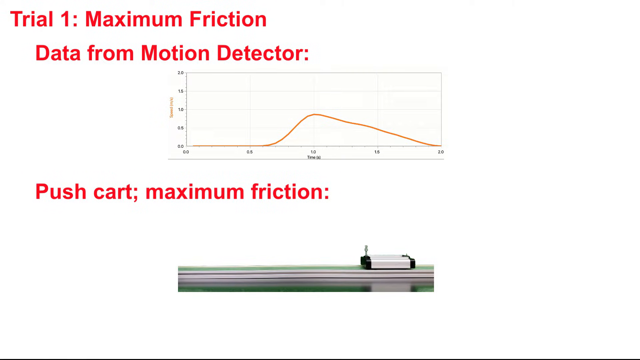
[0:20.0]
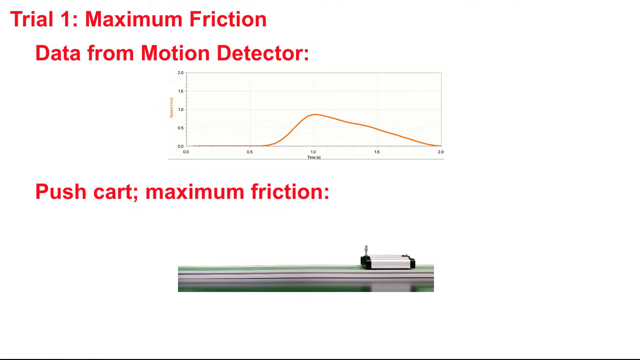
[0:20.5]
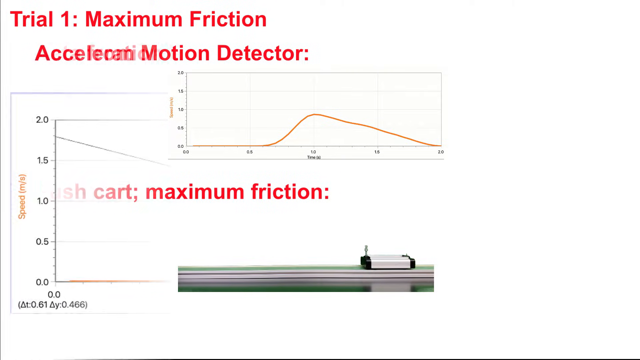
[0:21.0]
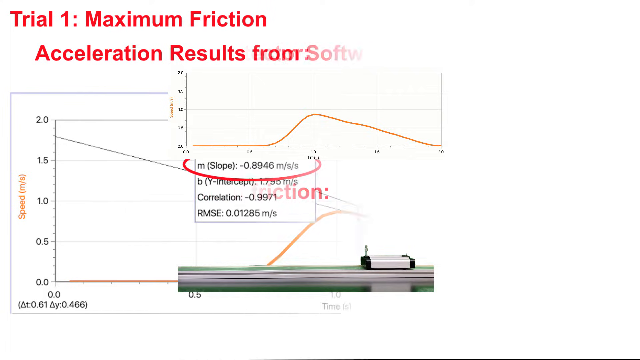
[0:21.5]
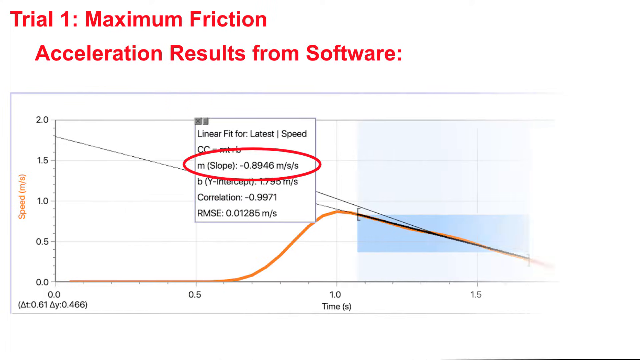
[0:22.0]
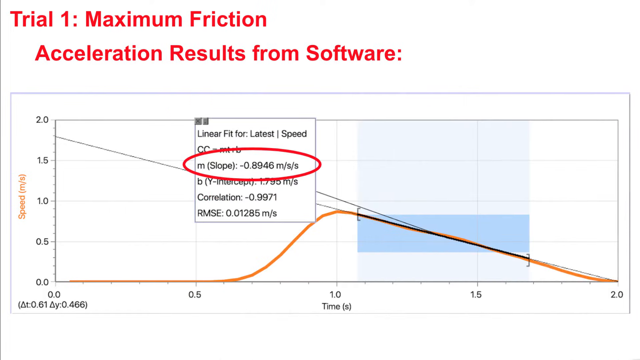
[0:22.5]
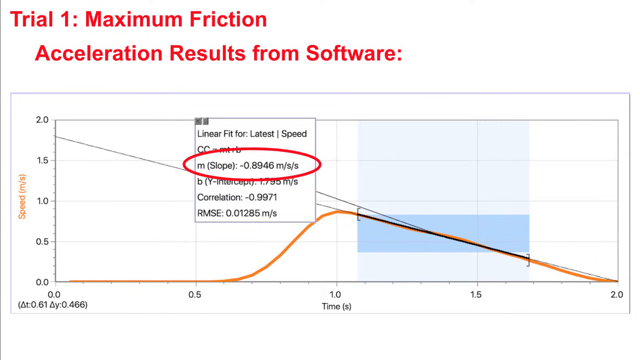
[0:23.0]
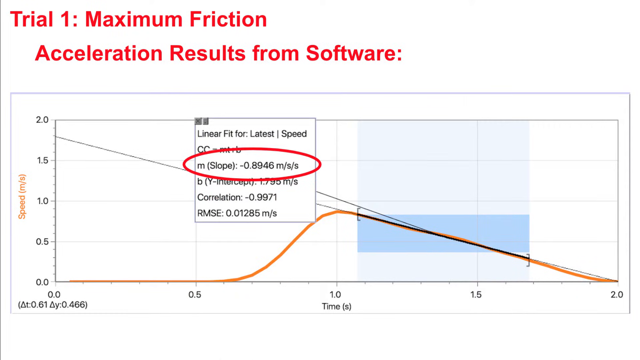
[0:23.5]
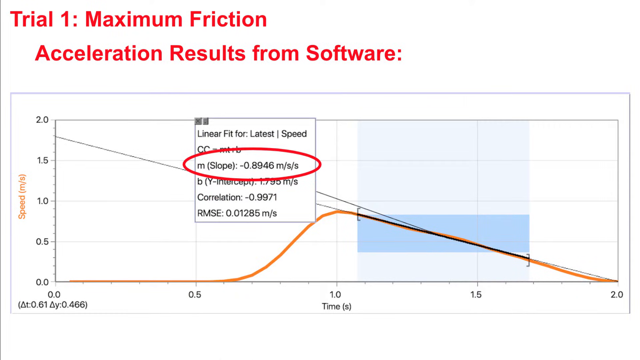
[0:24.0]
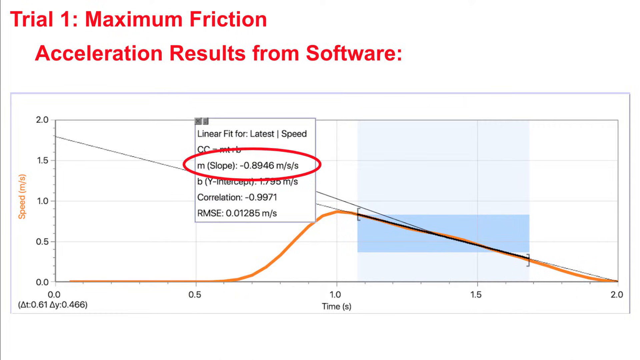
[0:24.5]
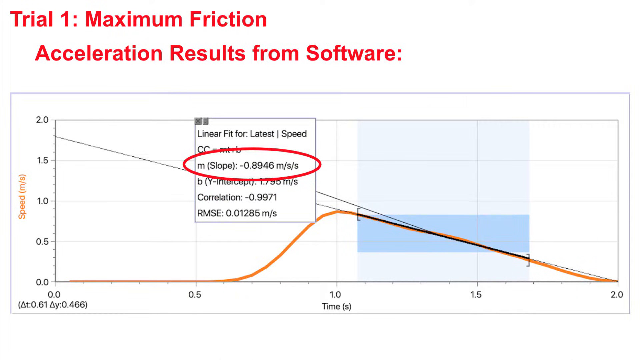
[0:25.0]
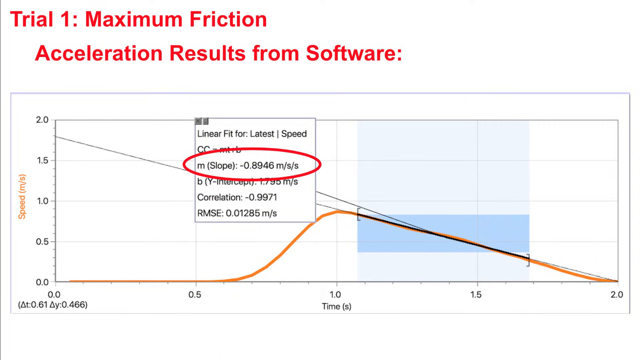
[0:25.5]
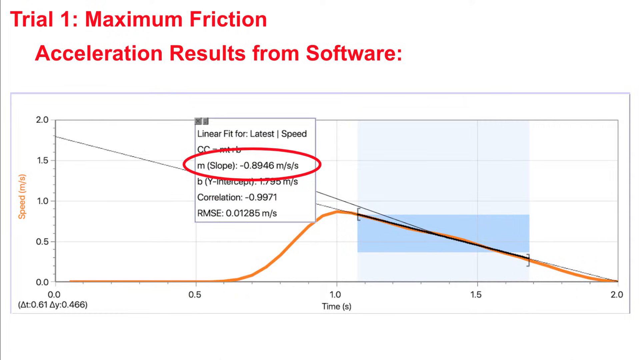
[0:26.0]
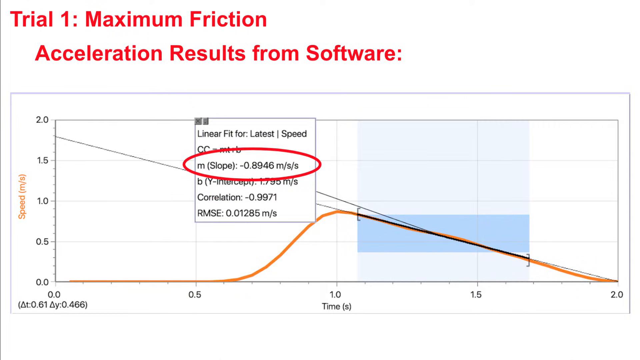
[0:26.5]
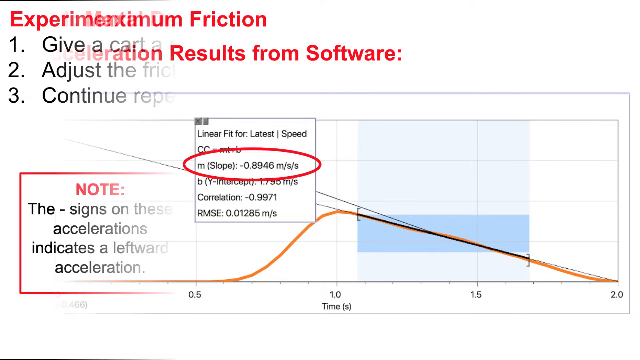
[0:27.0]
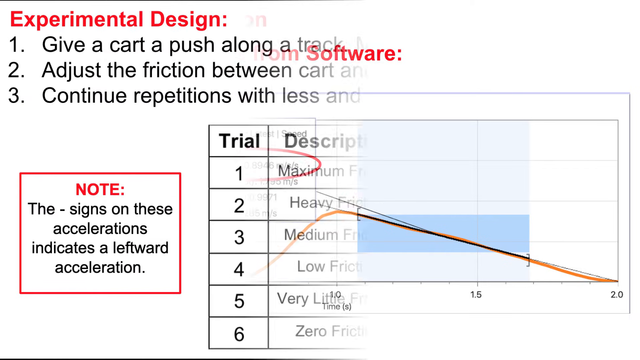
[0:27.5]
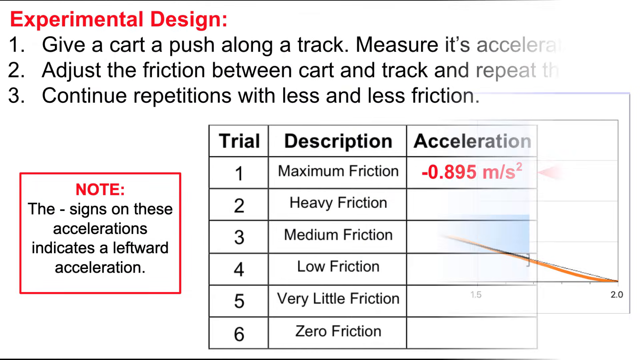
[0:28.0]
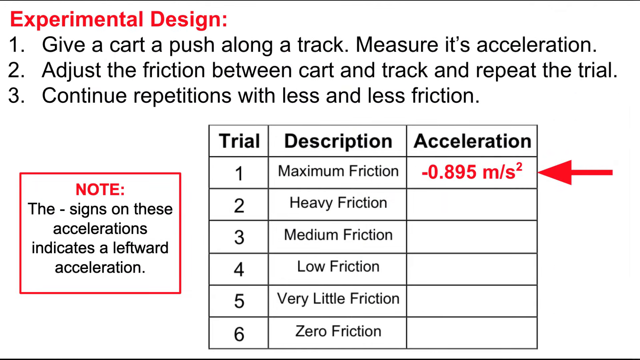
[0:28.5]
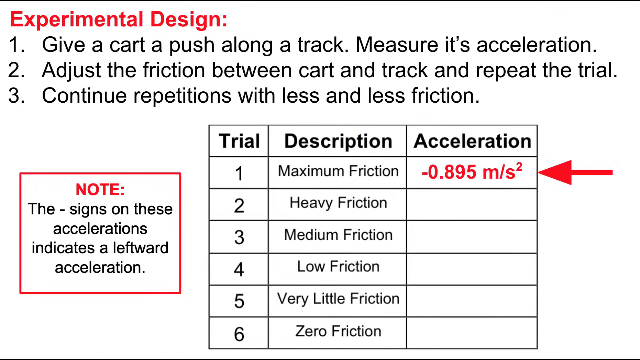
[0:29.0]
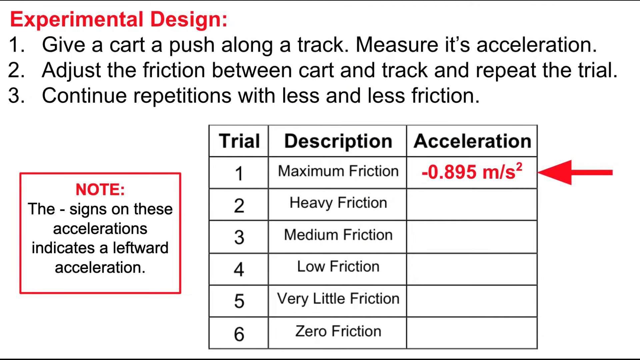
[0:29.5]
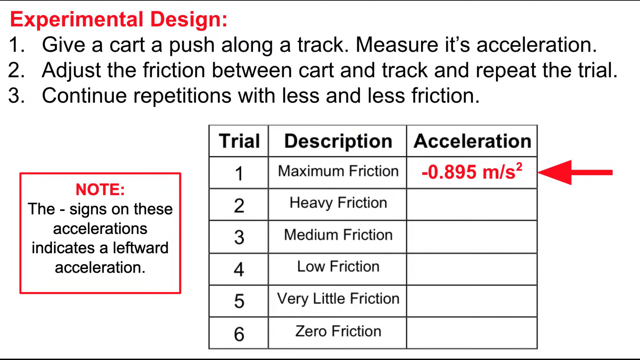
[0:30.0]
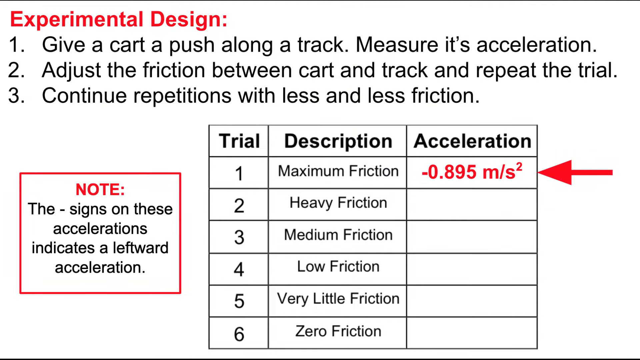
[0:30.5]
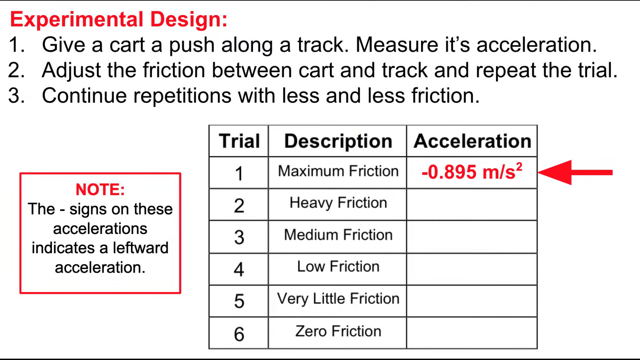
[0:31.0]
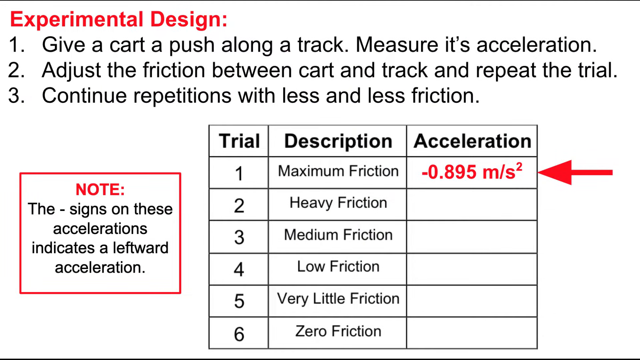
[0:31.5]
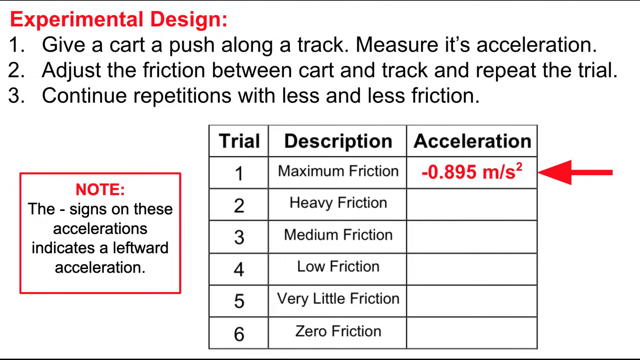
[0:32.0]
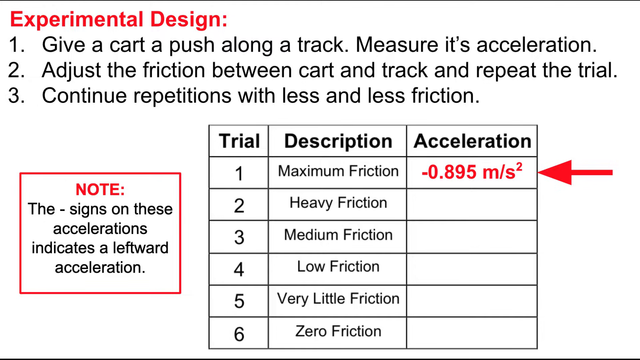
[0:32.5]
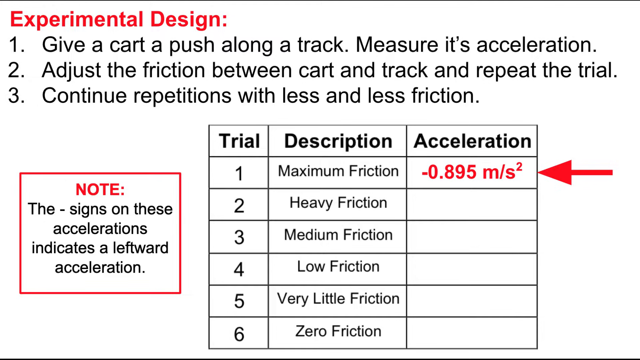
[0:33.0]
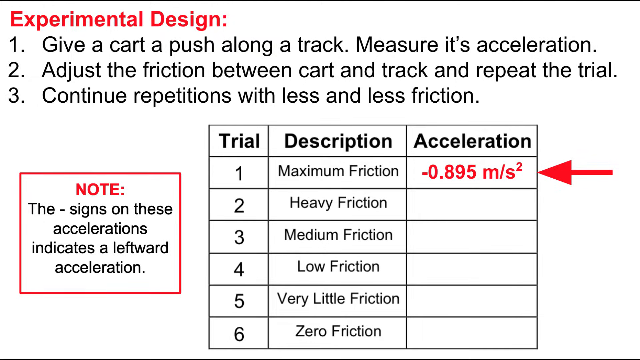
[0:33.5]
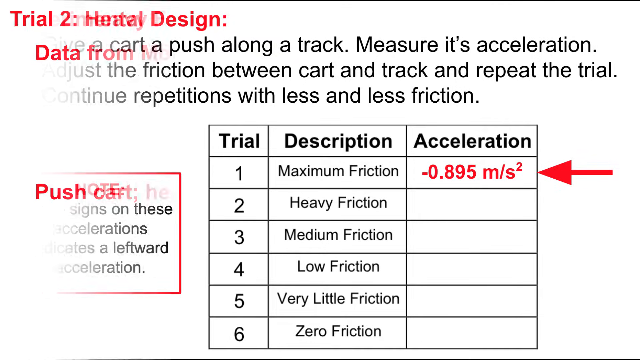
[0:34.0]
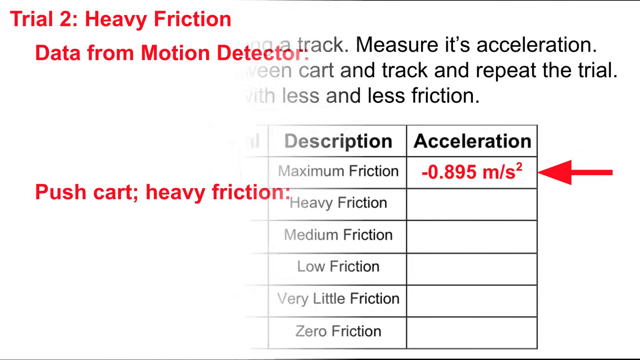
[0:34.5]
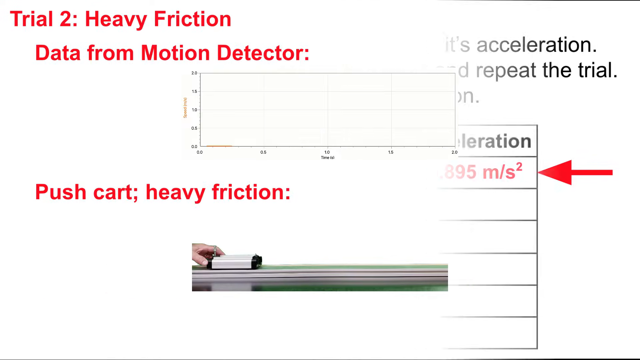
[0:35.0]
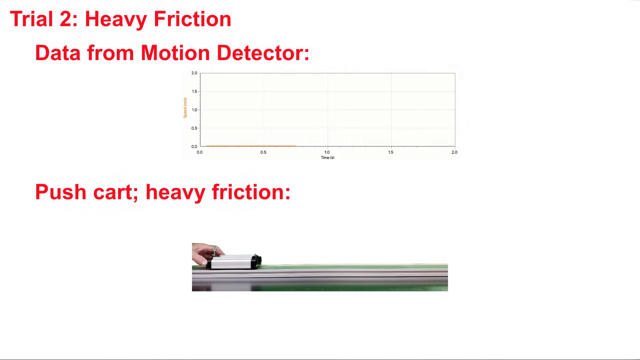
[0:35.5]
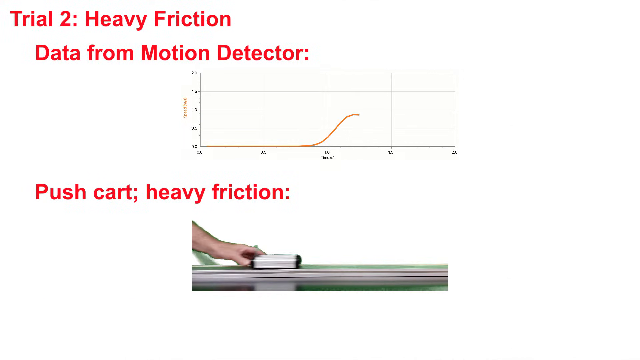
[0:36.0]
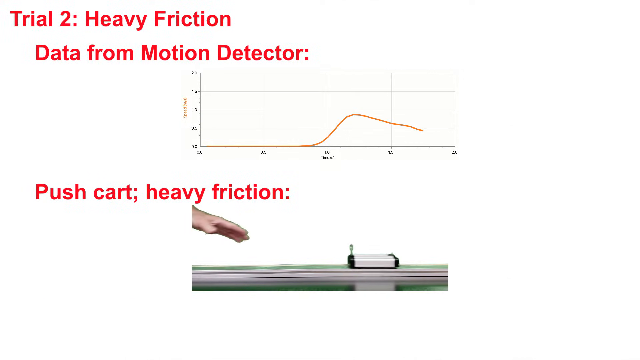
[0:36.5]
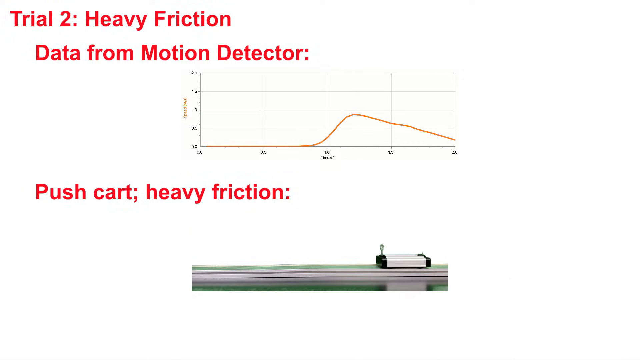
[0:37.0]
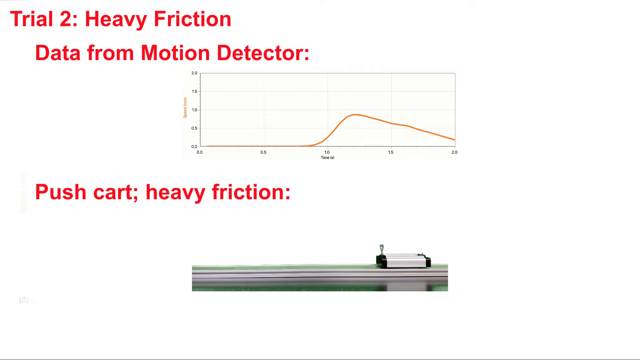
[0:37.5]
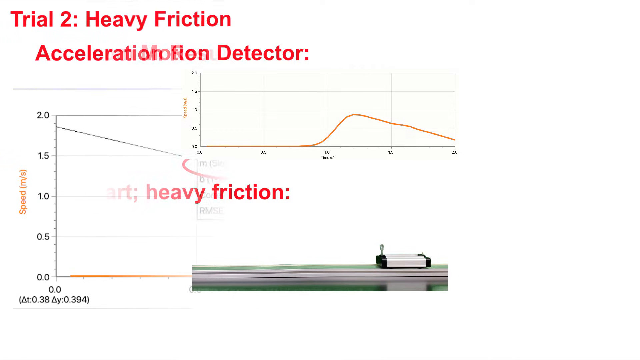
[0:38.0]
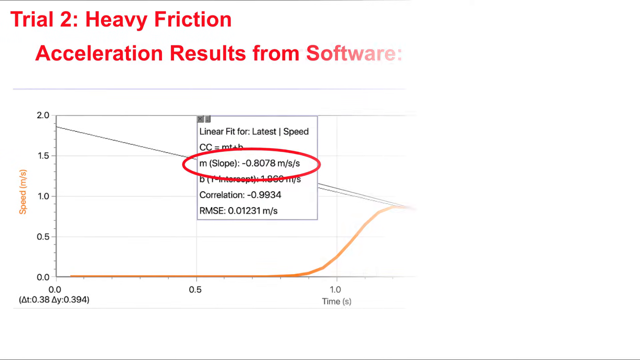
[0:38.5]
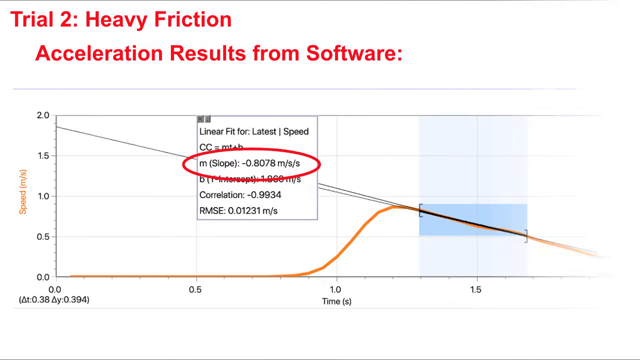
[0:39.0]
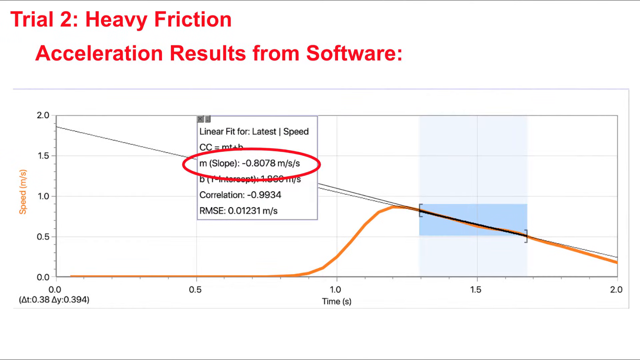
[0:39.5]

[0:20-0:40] A demonstration of the first trial is shown along with its result: a graph of the answers for the maximum friction trial. Data from the motor detector and a pushcart with heavy friction are shown, and a hand pushes a piece of equipment along a smooth path. The data from the motor detector appears on a graph showing where the push acts on the equipment. The graph has a vertical axis showing speed in meters per second and a horizontal axis showing time. At the one-minute point on the time axis, at a speed of 1.0, the push on the equipment is marked, and the slope is 0.7 meters per second squared.